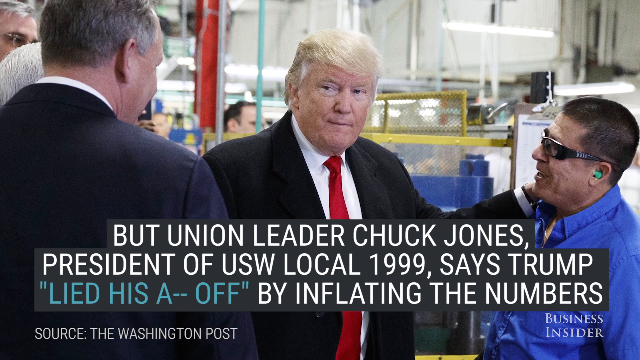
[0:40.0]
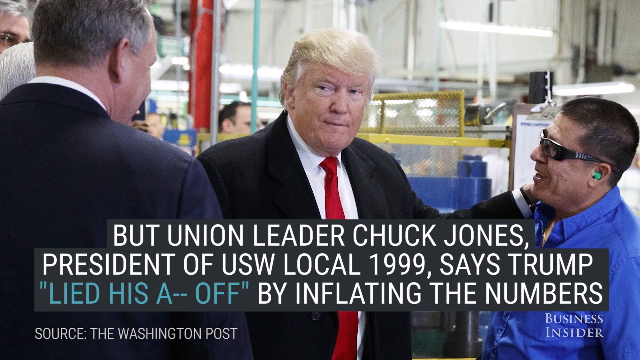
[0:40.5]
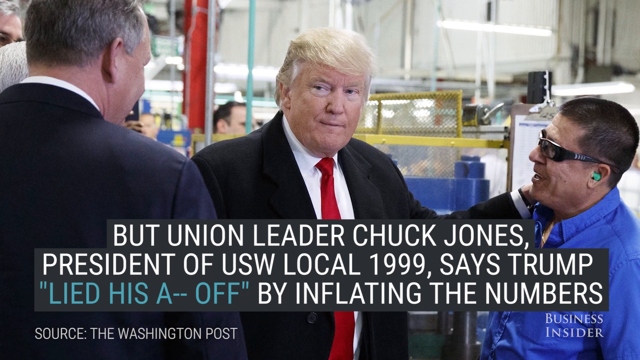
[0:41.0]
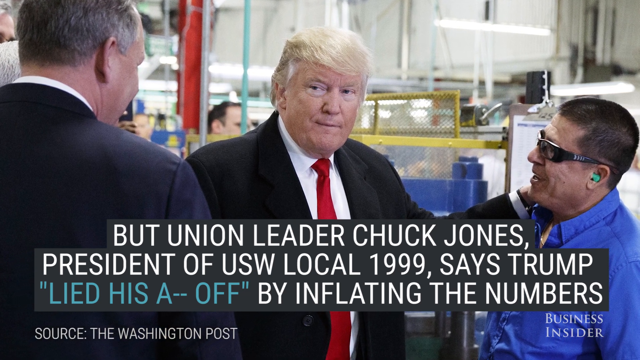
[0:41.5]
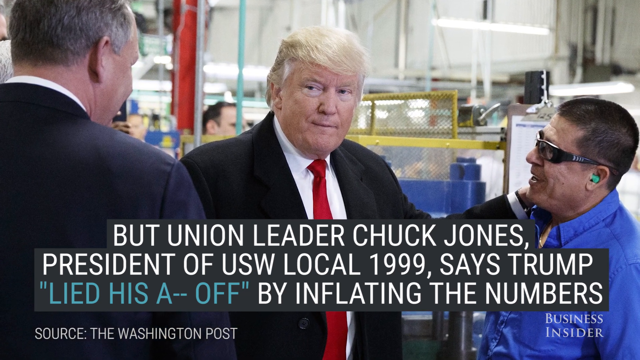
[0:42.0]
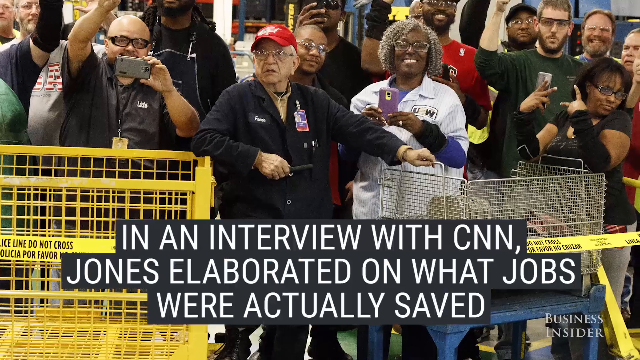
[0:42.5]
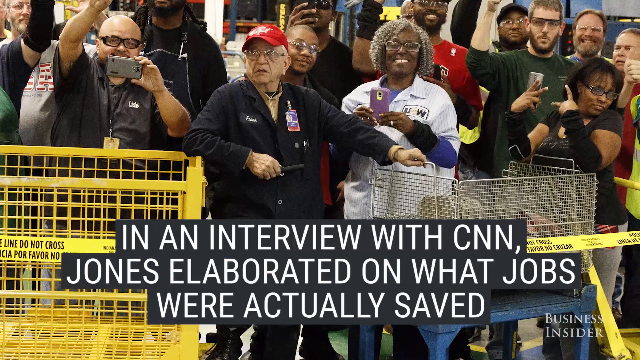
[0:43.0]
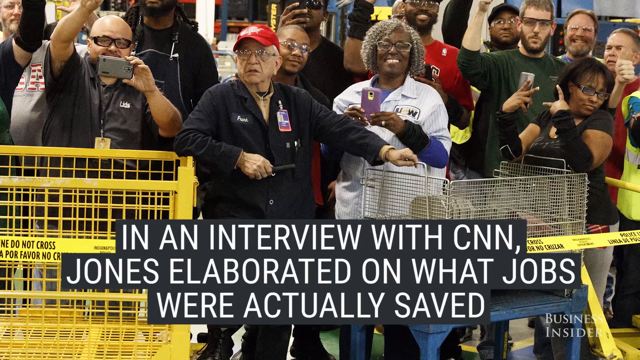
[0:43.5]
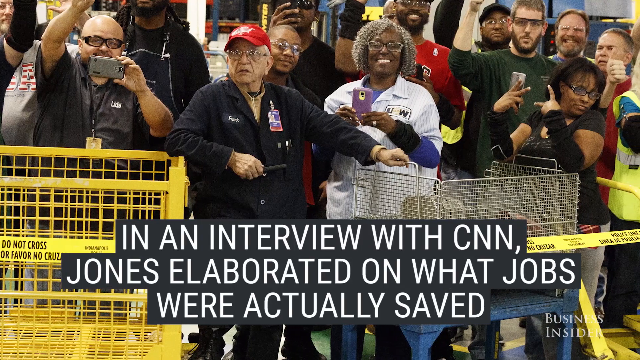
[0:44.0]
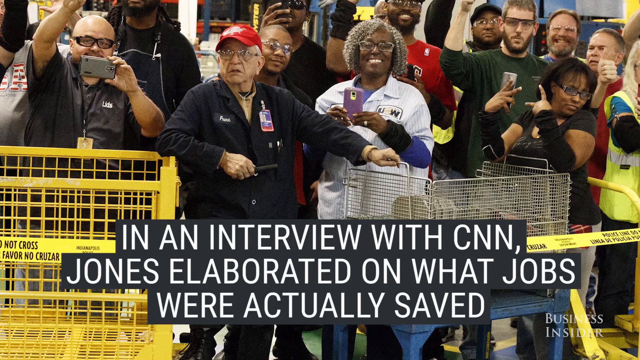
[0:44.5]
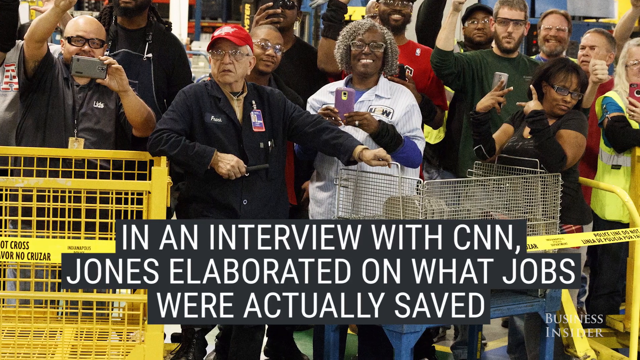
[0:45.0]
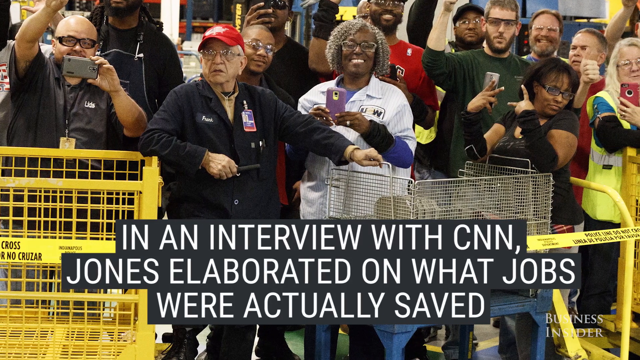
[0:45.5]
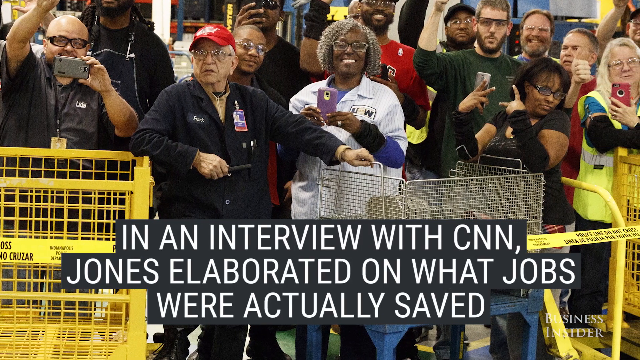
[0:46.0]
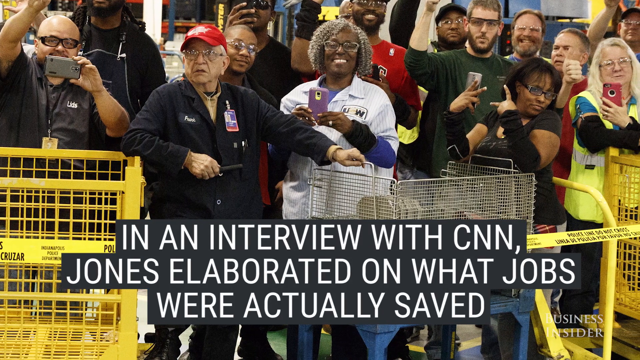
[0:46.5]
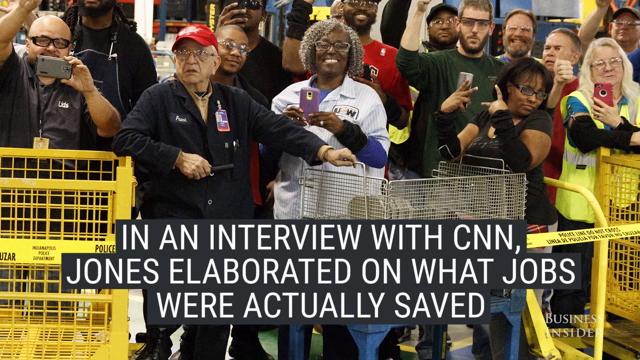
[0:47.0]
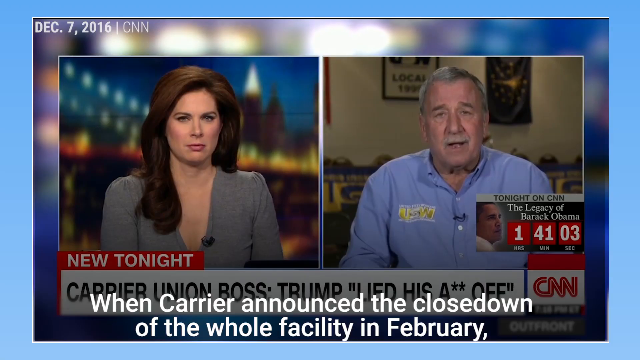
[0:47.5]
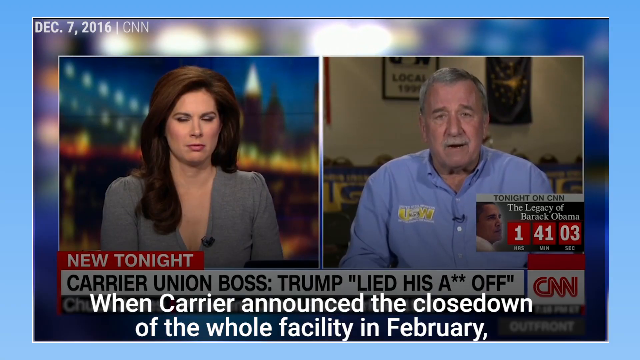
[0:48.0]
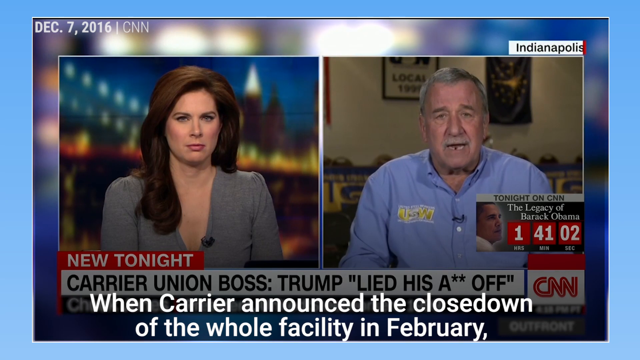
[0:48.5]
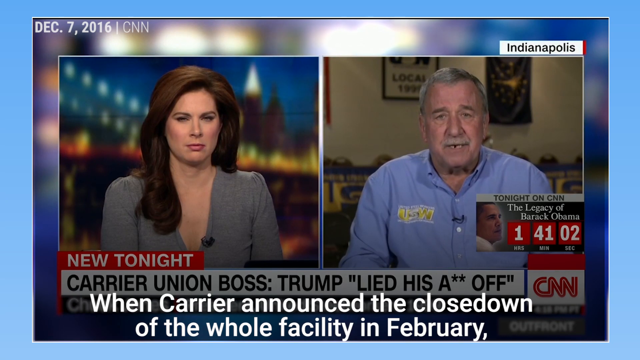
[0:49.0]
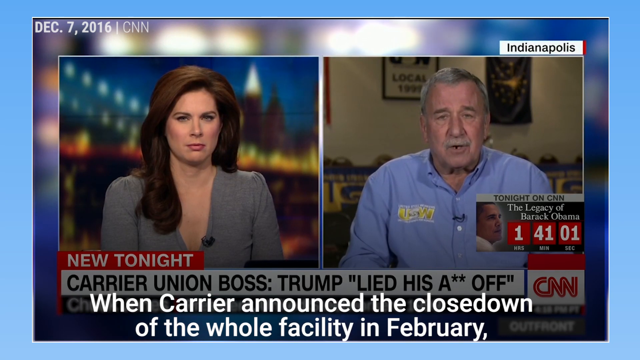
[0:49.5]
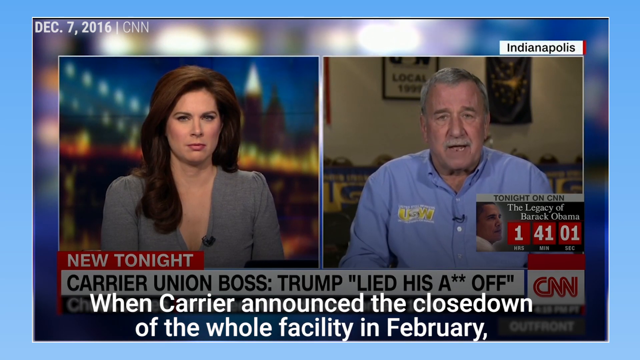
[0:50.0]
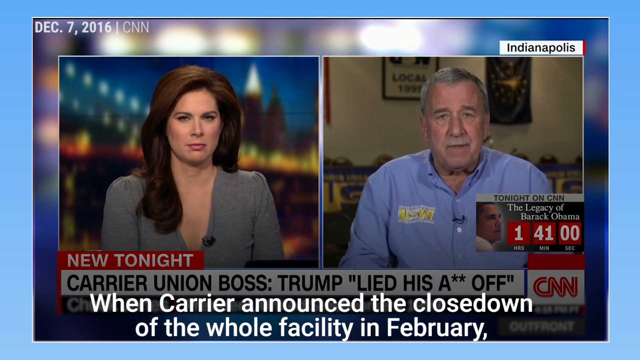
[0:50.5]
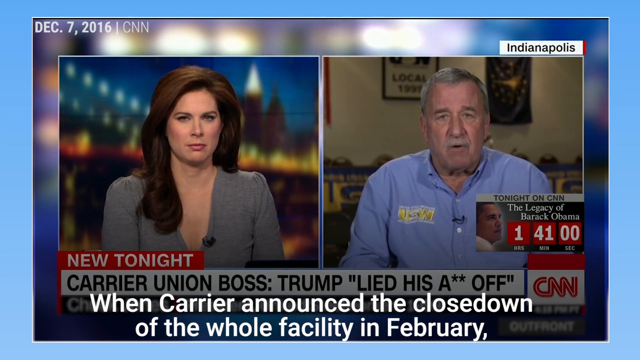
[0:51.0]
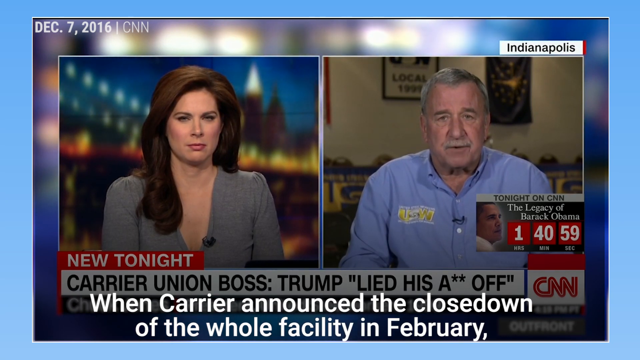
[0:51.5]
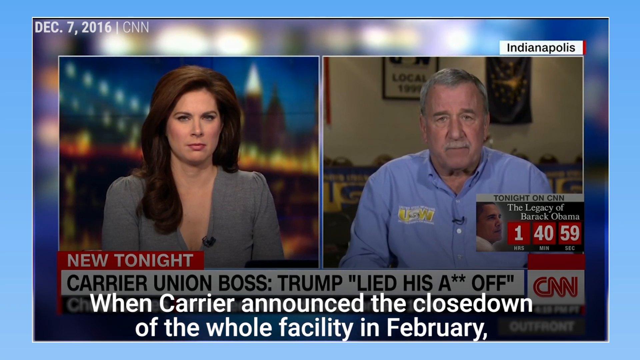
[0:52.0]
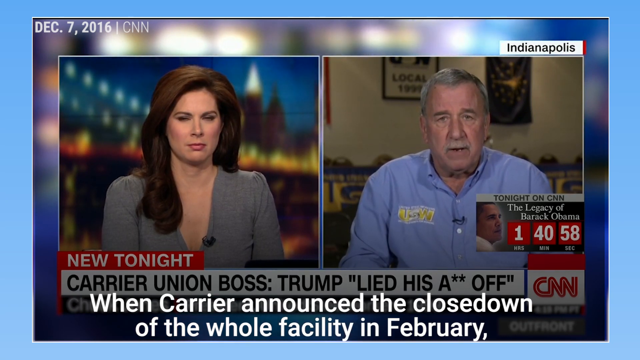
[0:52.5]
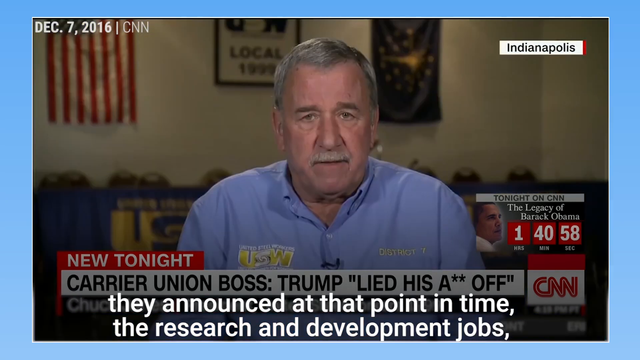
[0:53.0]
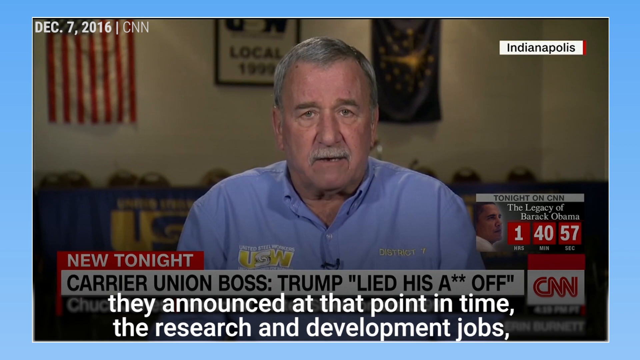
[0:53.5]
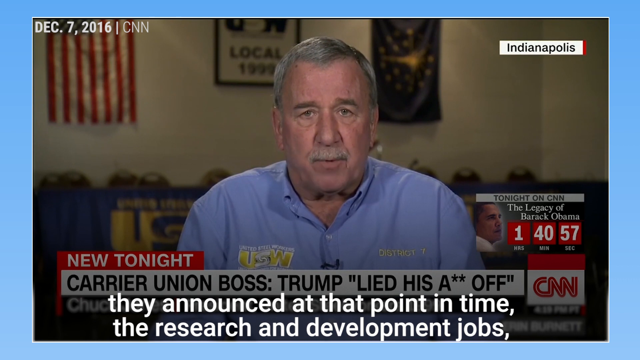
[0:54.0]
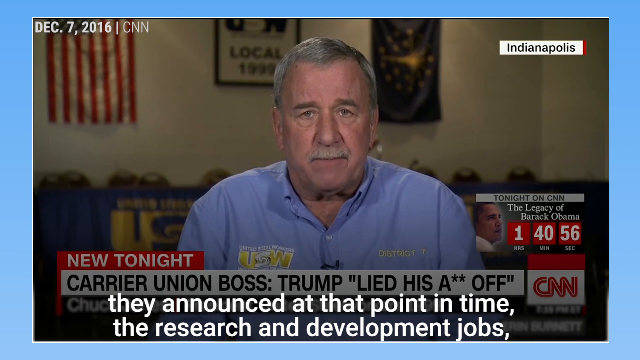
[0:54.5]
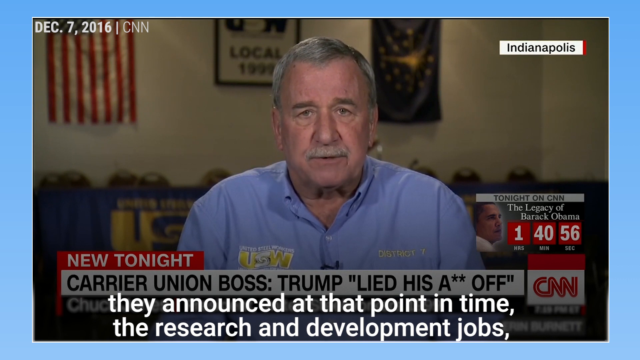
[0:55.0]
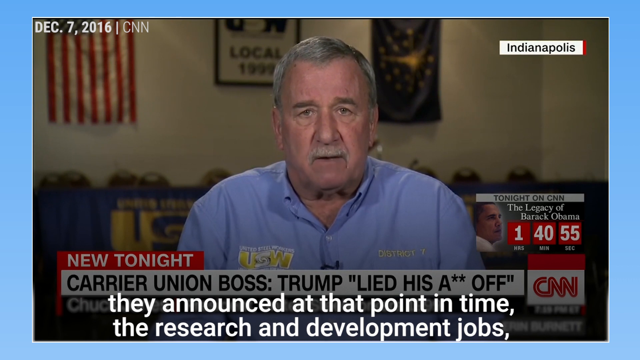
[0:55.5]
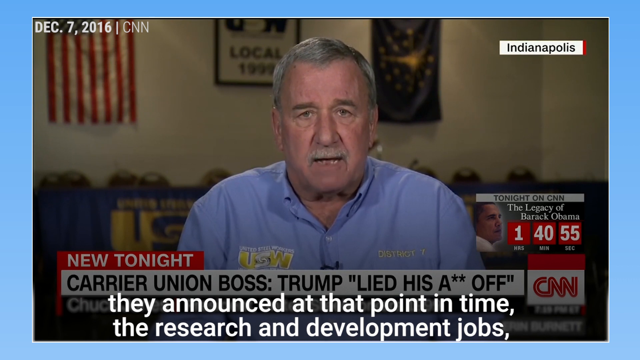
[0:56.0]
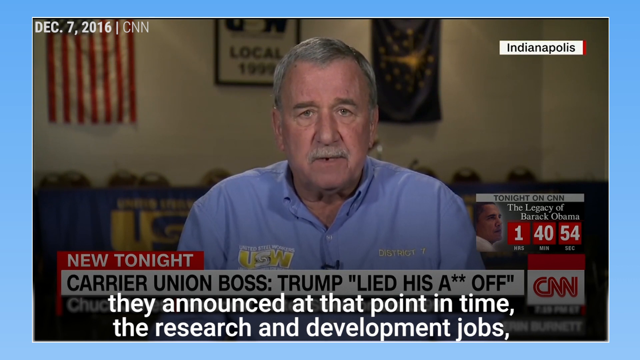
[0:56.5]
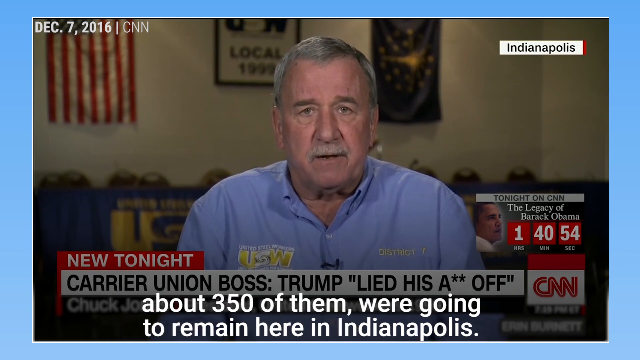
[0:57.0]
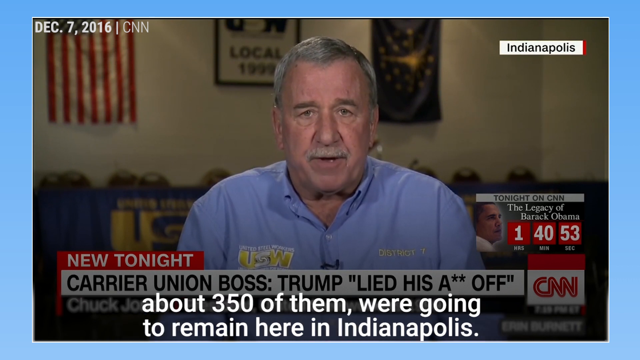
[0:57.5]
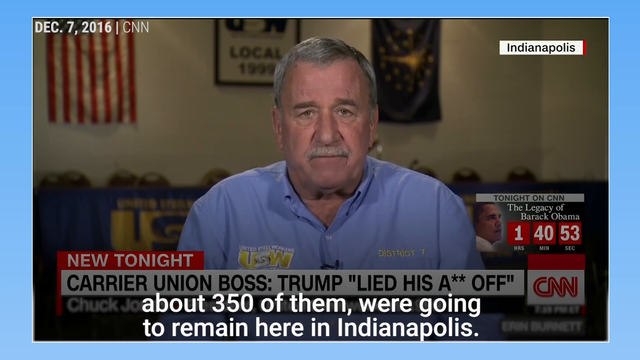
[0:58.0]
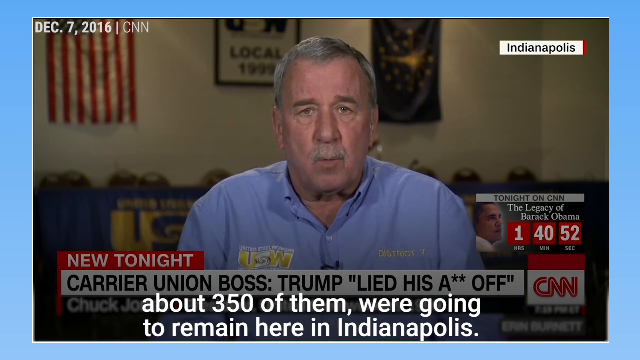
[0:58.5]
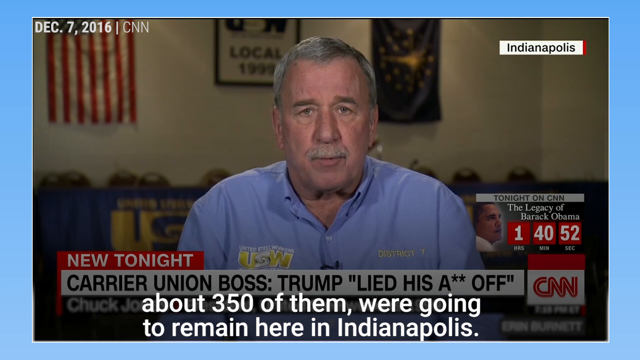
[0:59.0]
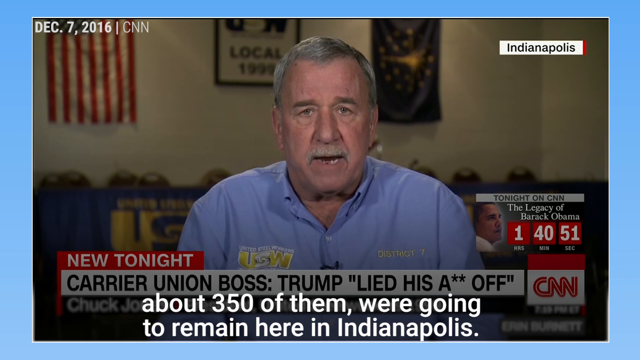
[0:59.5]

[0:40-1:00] After another transition, an outside building appears with several manufactured units, like AC units, along with text announcing they had saved over 1,100 jobs at the Carrier AC plant. Several metallic ACs with their filters still attached appear to be on a conveyor belt outside a fence topped with barbed wire. The scene transitions to President Donald Trump and Vice President Mike Pence shaking hands with what appear to be staff and employees of Carrier. The employees wear hats and helmets and appear to be Caucasian. Text at the bottom reads "from moving to Mexico." Trump is then shown at the podium with white text reading "I will tell you that the United Technologies and Carriers step it up."